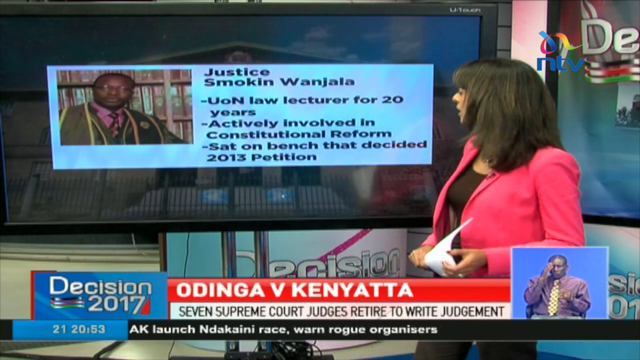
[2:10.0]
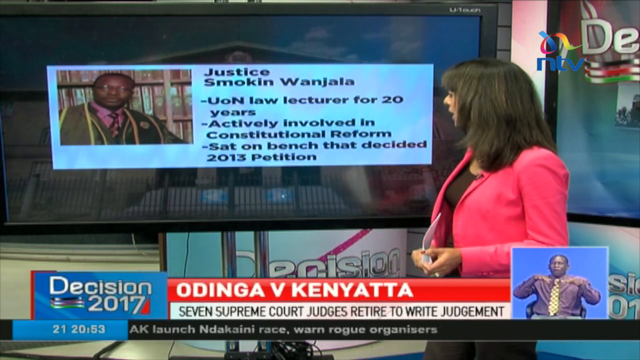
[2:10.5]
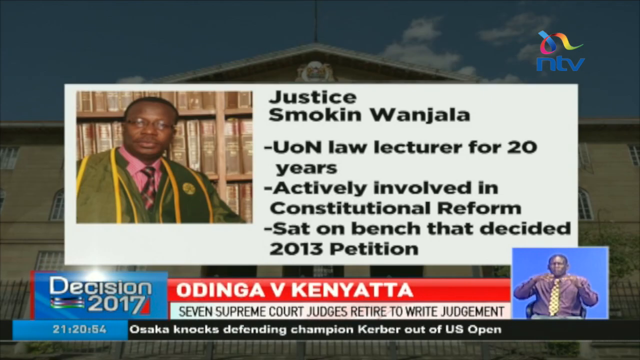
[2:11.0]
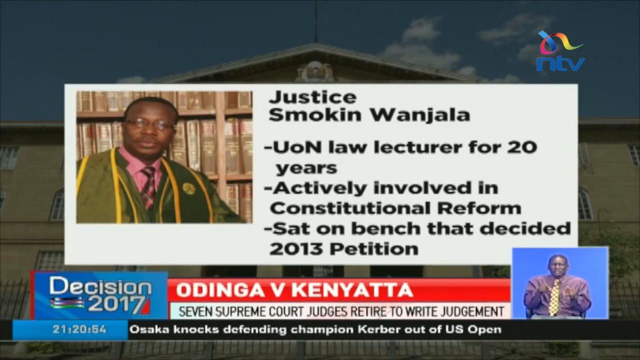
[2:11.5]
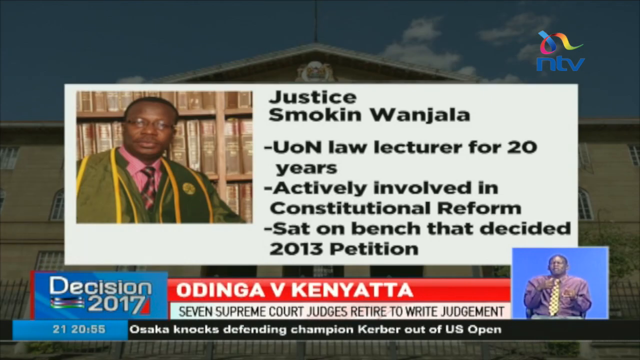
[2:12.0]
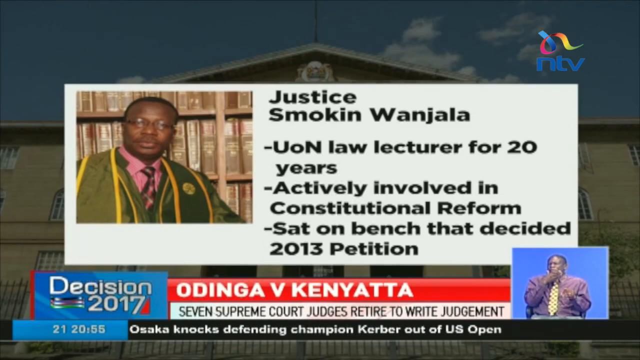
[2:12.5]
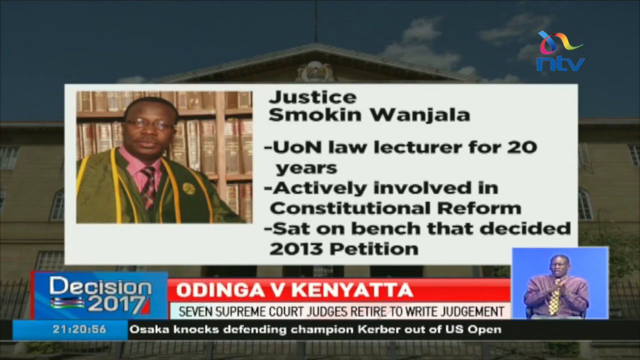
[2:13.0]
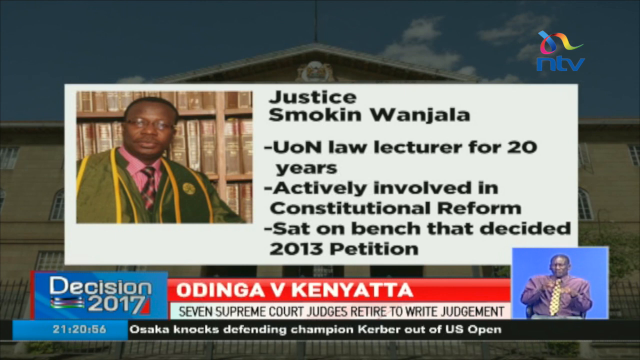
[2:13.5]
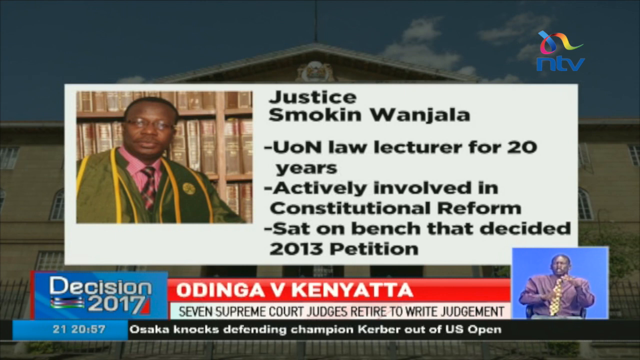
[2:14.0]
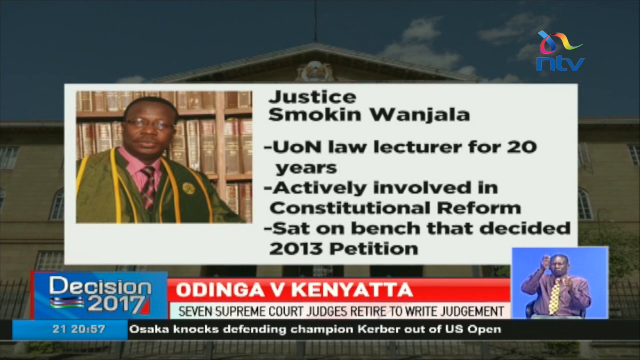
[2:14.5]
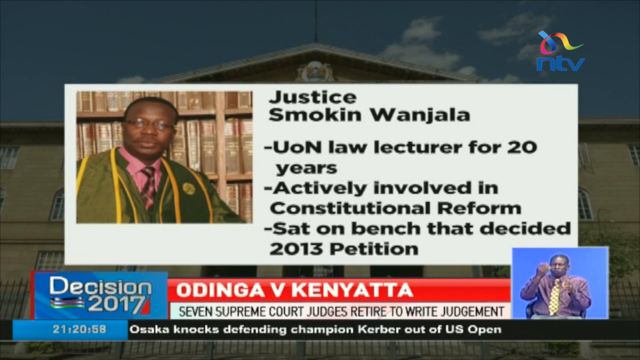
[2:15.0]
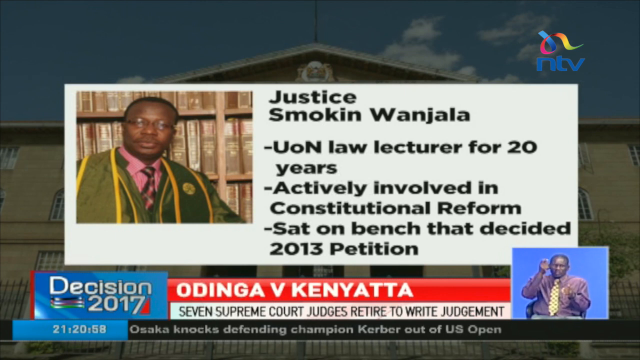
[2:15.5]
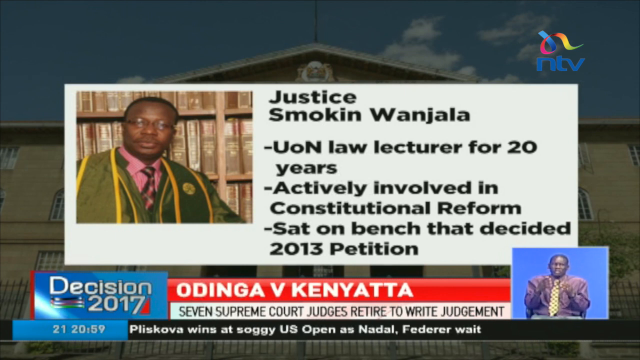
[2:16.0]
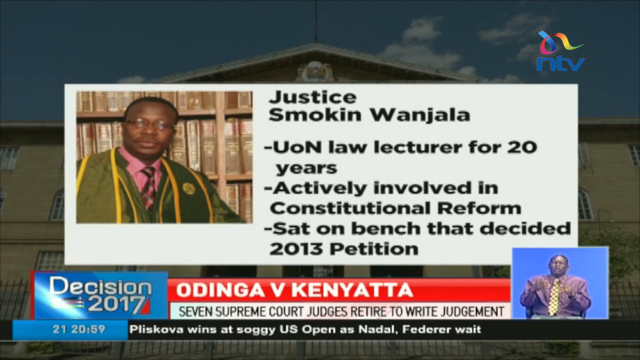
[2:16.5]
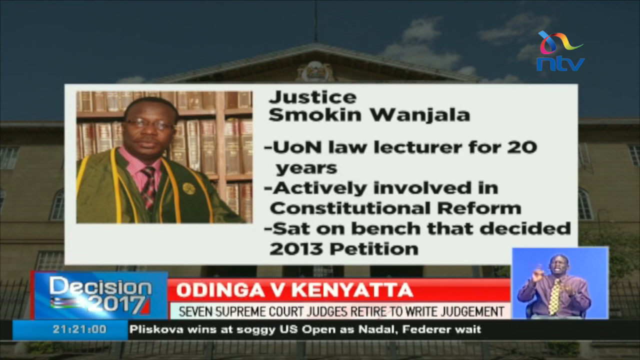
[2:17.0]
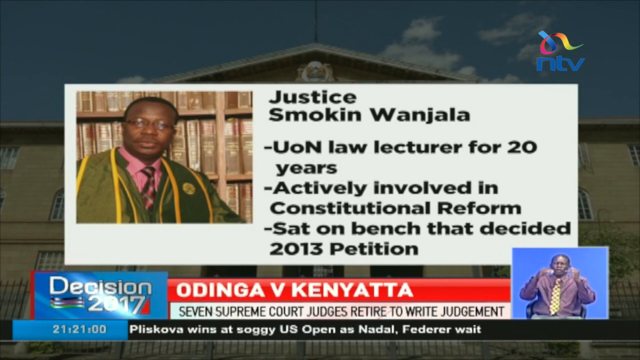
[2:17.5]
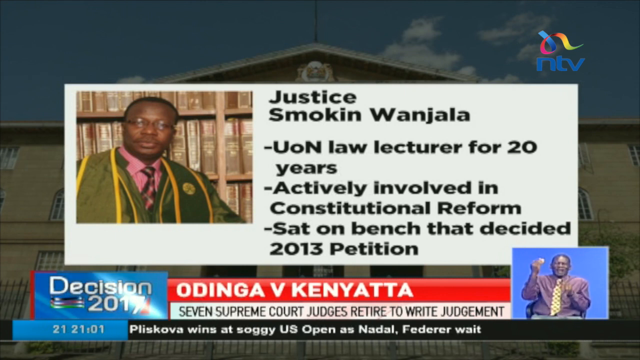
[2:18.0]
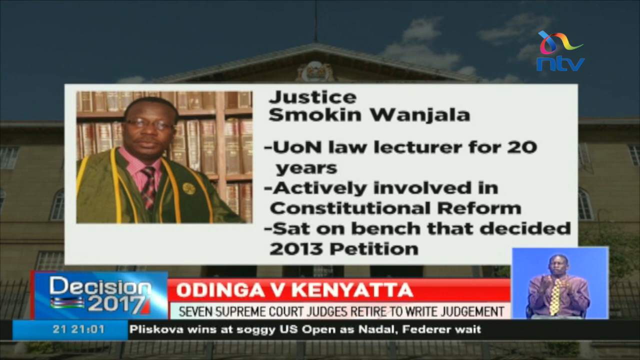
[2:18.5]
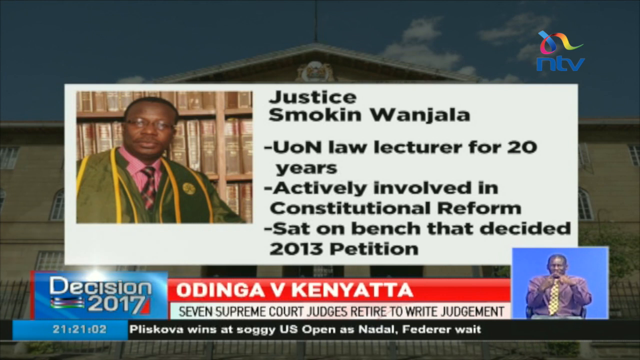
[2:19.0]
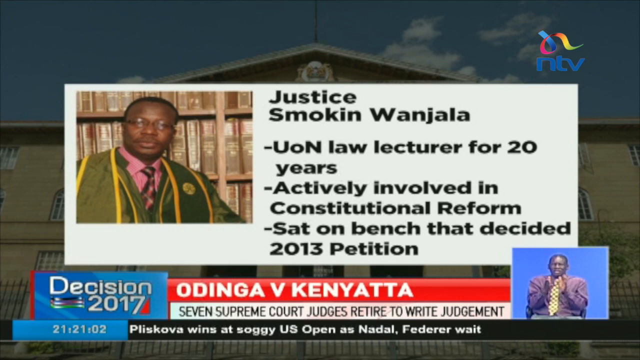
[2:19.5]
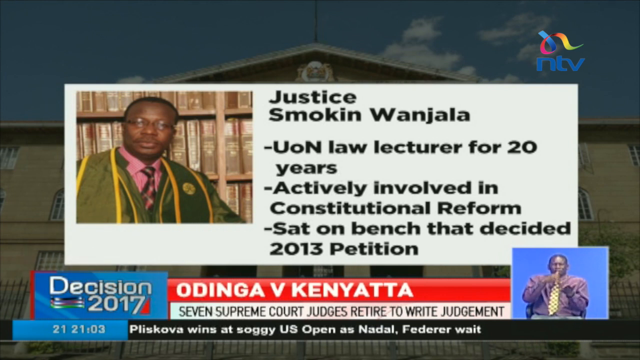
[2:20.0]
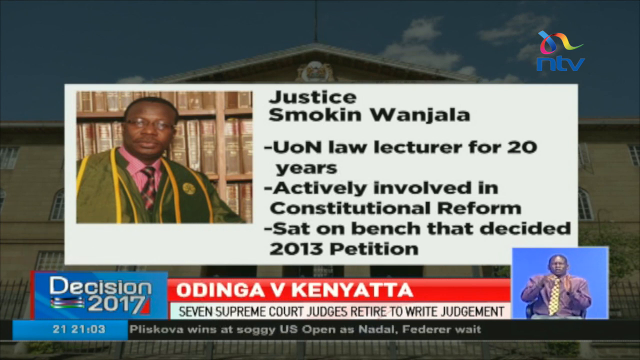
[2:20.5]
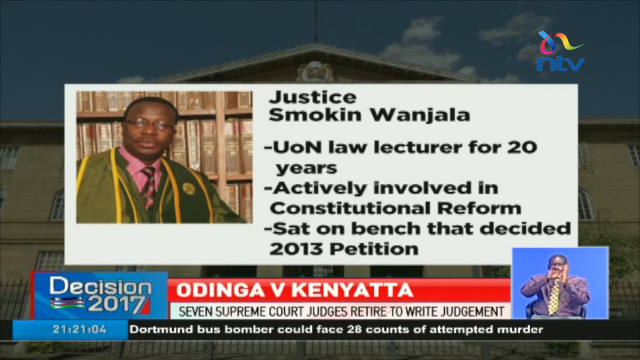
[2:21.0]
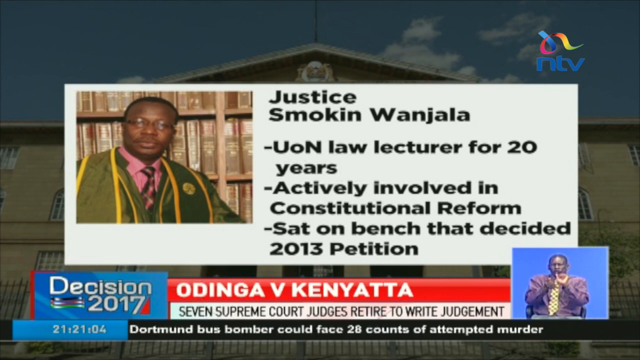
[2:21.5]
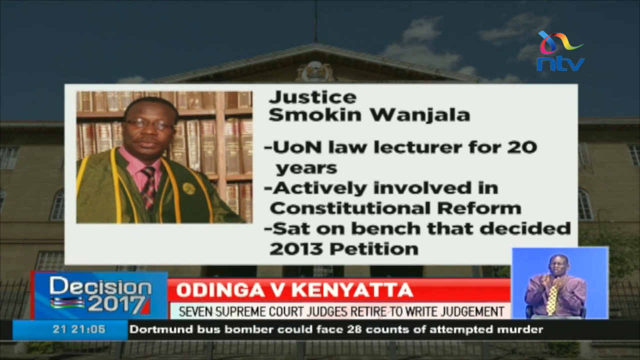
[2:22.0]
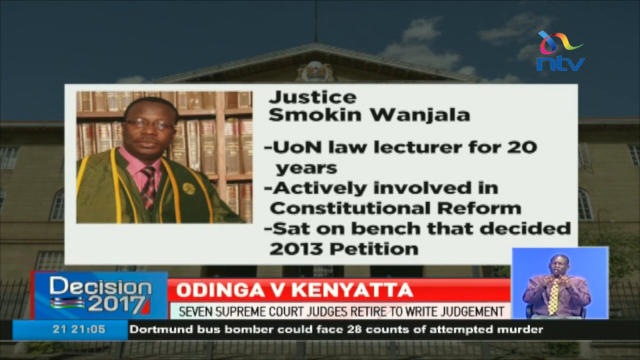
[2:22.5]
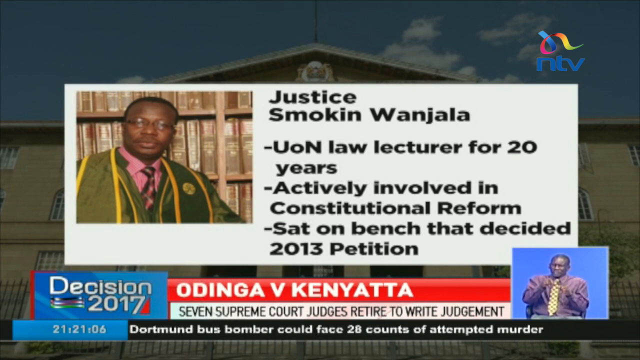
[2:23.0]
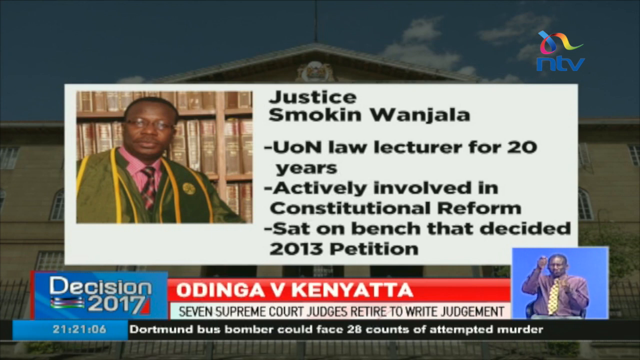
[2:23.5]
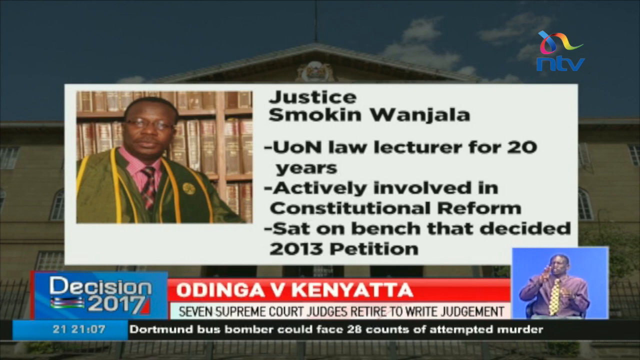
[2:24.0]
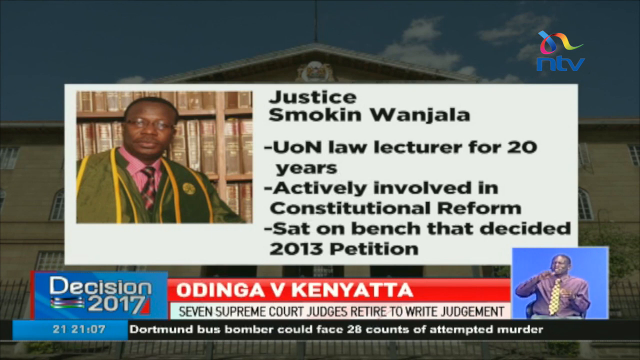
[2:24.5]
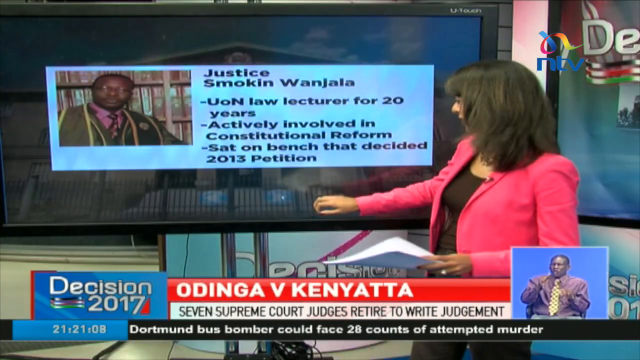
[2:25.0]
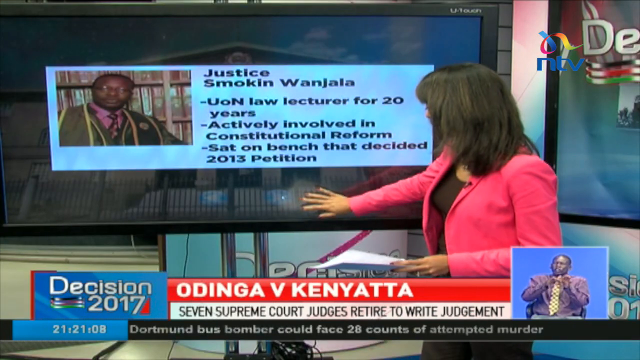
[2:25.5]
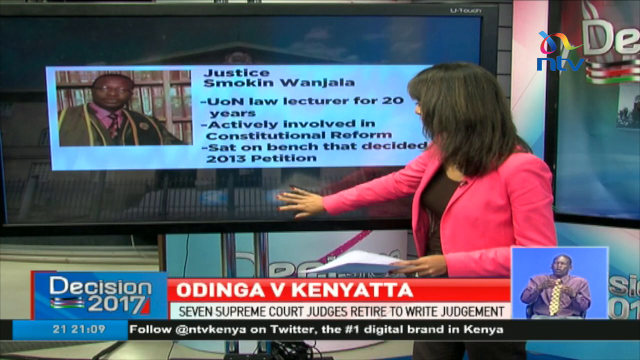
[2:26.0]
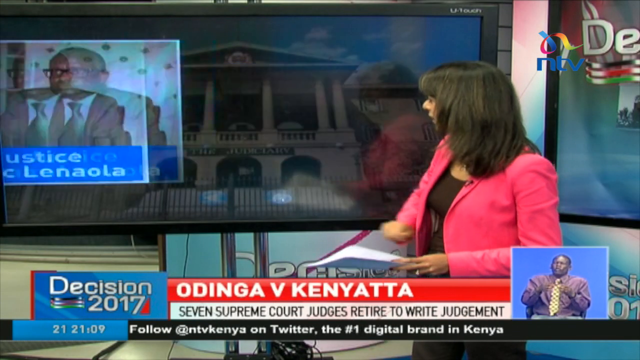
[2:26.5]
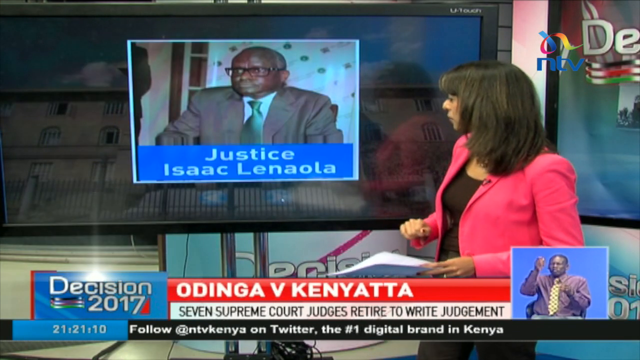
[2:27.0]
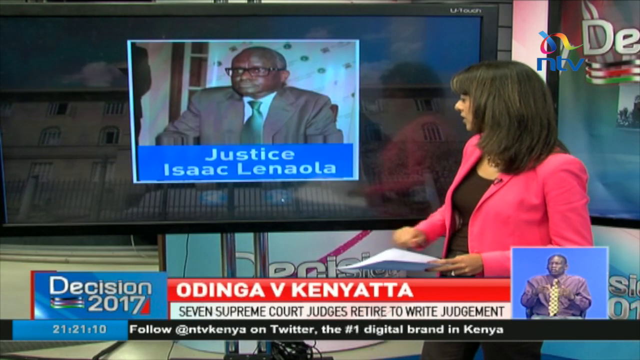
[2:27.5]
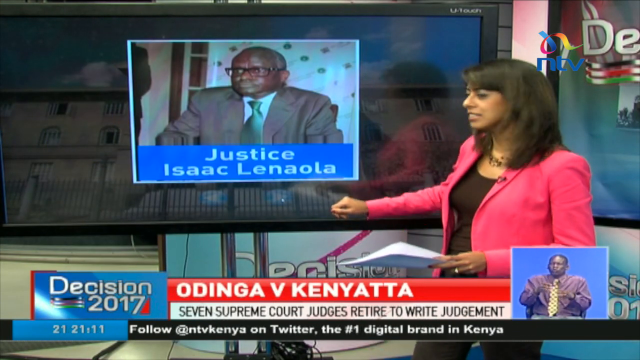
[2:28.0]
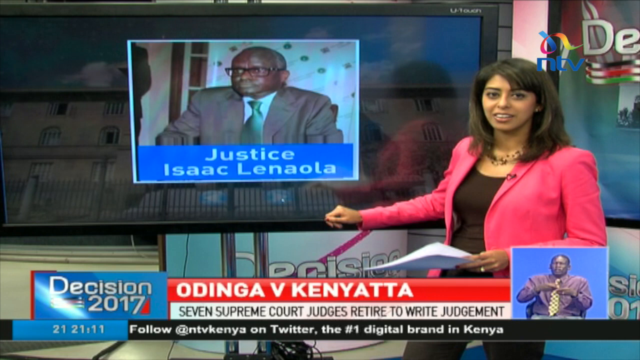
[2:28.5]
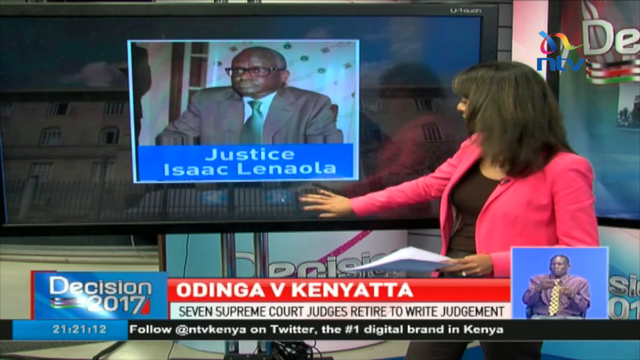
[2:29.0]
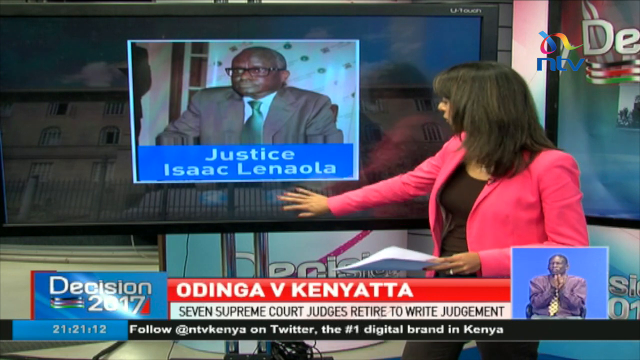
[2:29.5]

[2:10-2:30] The news reporter stands in front of the wide screen introducing the next judge. The screen has a black background with a long white horizontal rectangular box in the middle. On its left is an image of an African judge with short hair and glasses, wearing a pink button-up shirt with a brown, pink, and tan tie and a judge's sash around his neck that is kind of black with yellow trim on both sides. To the right it says "Justice Smokin Wanjala," followed by a bullet list: "UoN law lecturer for 20 years," "Actively involved in constitutional reform," and "Sat on bench that decided 2013 petition." The reporter is kind of facing the screen, then turns back to the camera. The image of Justice Smokin Wanjala in the white box with his bullet points is then blown up on the screen. The scene goes back to the reporter in front of the screen, and she presses the forward play button on the bottom of the screen. An image appears of an older African man in a gray suit, white button-up shirt, and shiny green tie; he is kind of bald with a little gray hair on the sides and wears glasses. Underneath it says "Justice Isaac Lanaola." The reporter is kind of looking at the screen, introducing this judge, then kind of turns back to the camera as she speaks, still holding the pieces of white paper. She then turns back to the screen and presses the forward play button.